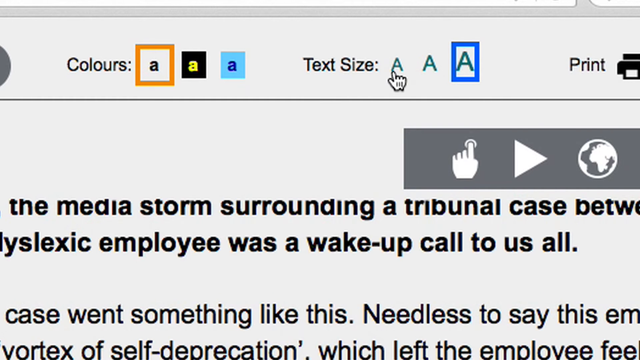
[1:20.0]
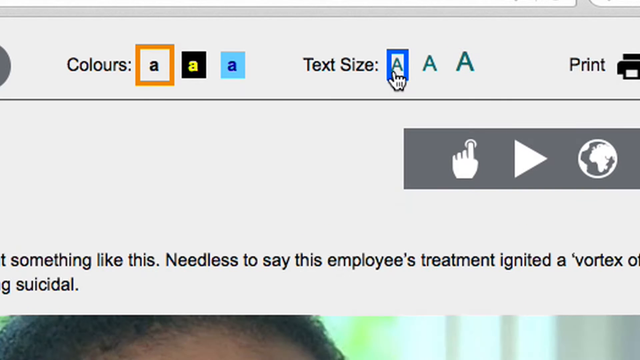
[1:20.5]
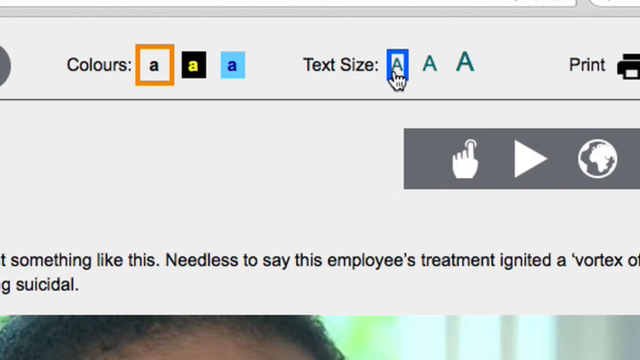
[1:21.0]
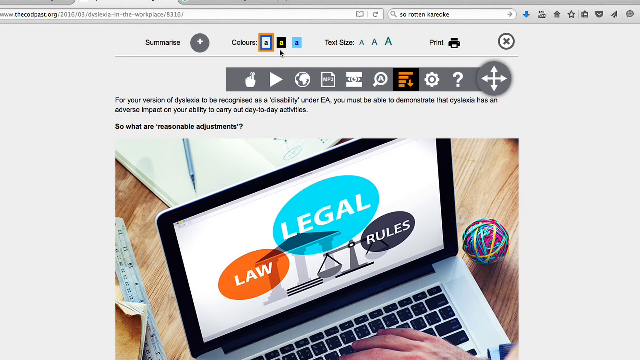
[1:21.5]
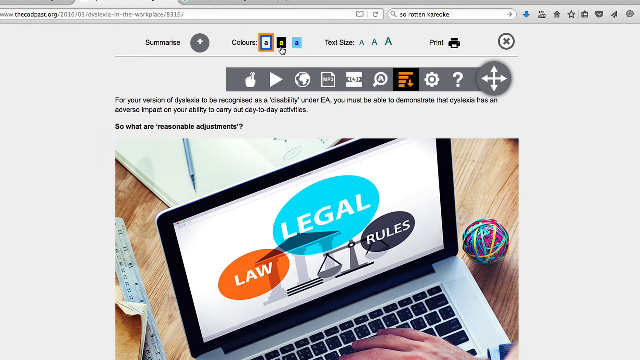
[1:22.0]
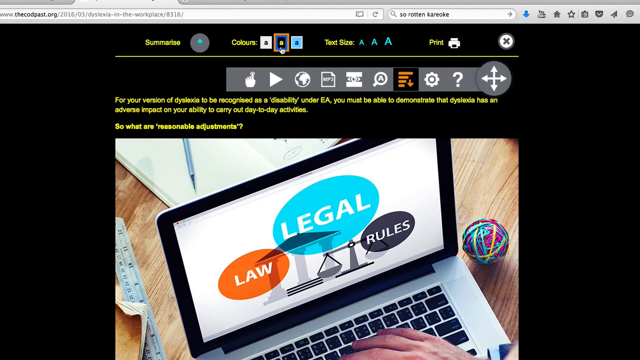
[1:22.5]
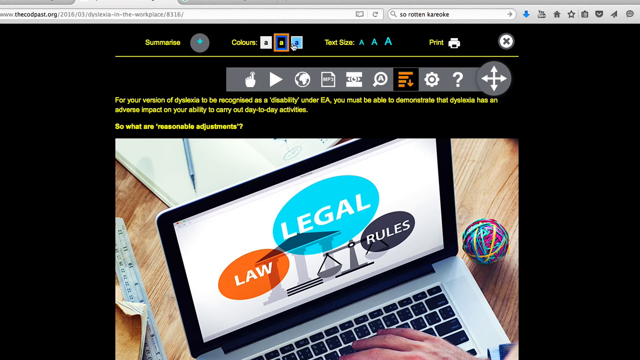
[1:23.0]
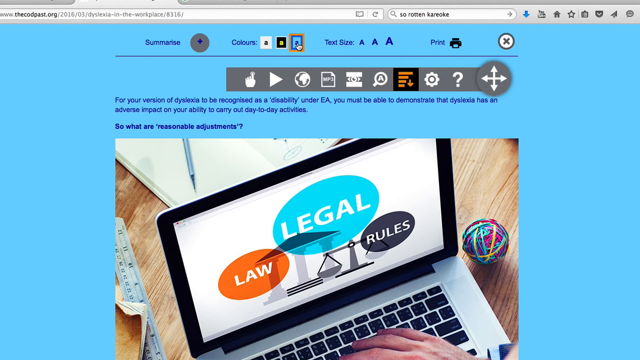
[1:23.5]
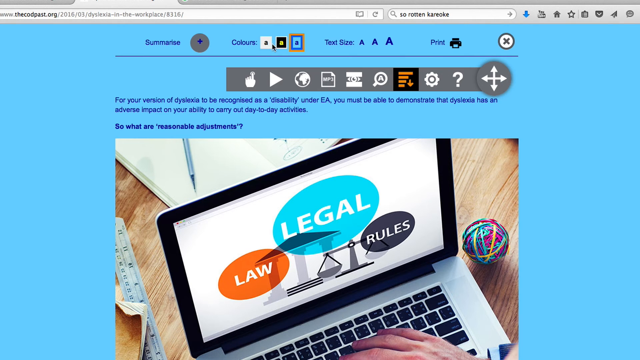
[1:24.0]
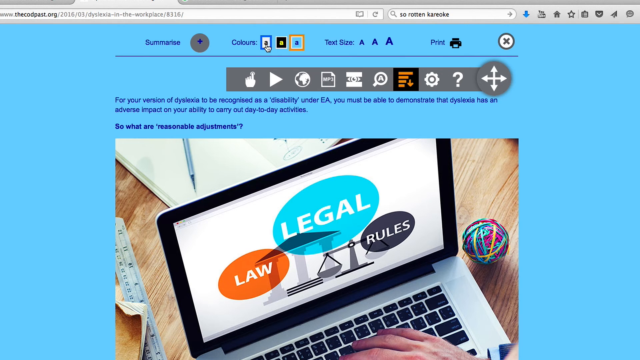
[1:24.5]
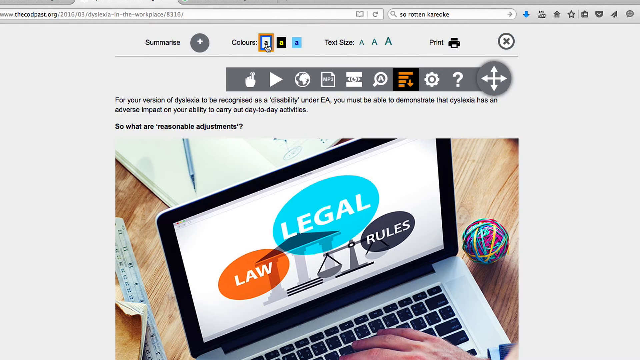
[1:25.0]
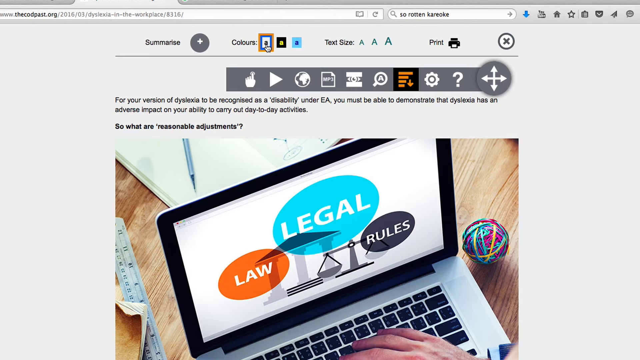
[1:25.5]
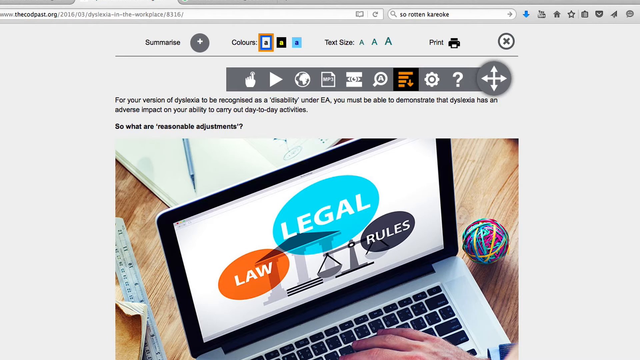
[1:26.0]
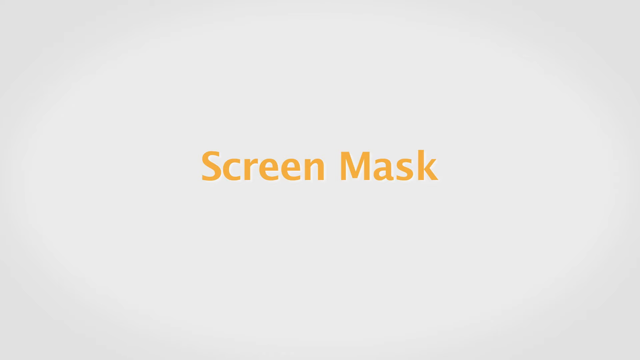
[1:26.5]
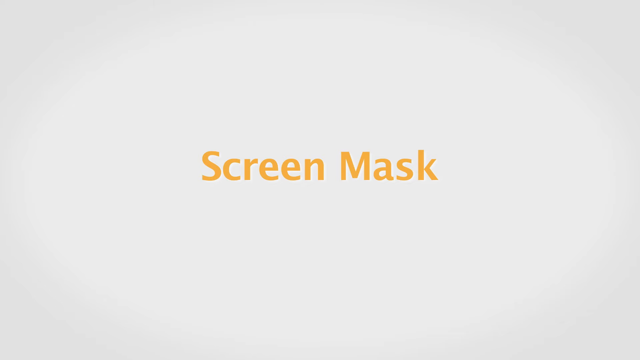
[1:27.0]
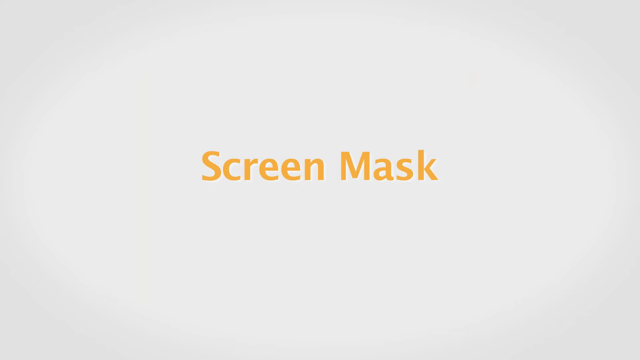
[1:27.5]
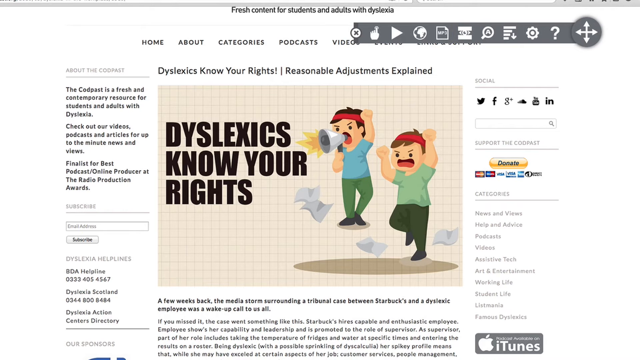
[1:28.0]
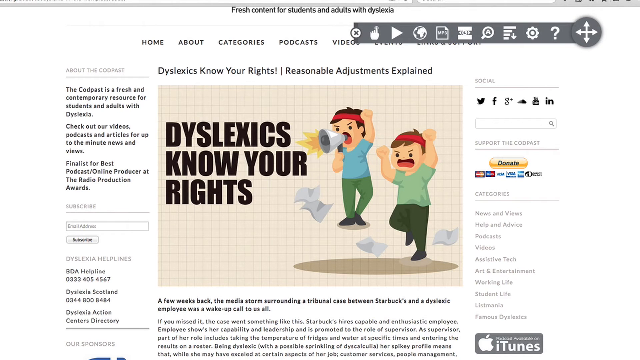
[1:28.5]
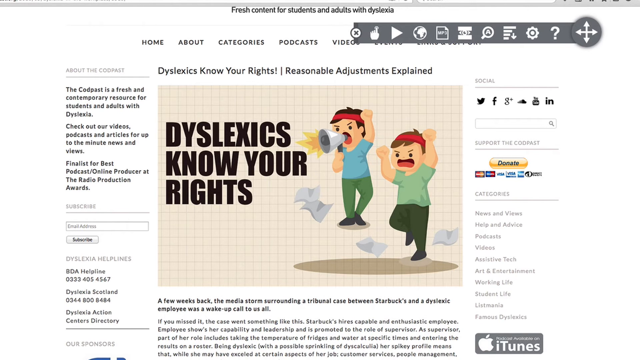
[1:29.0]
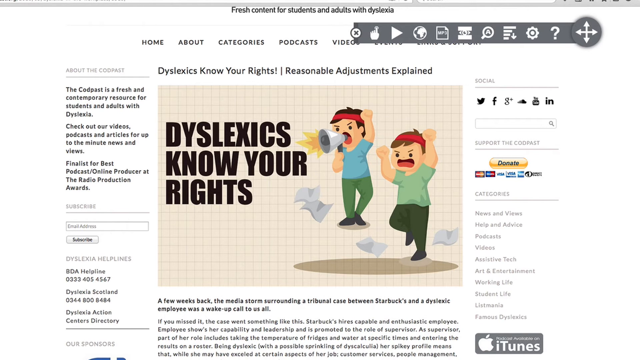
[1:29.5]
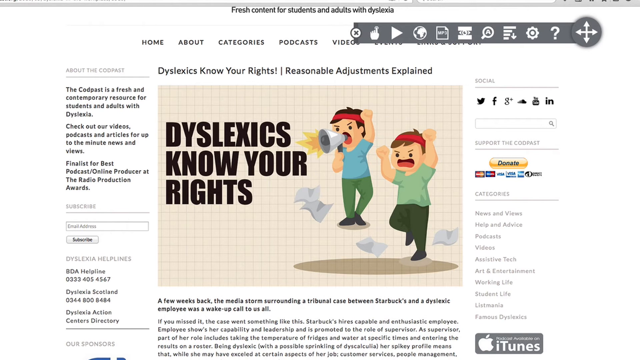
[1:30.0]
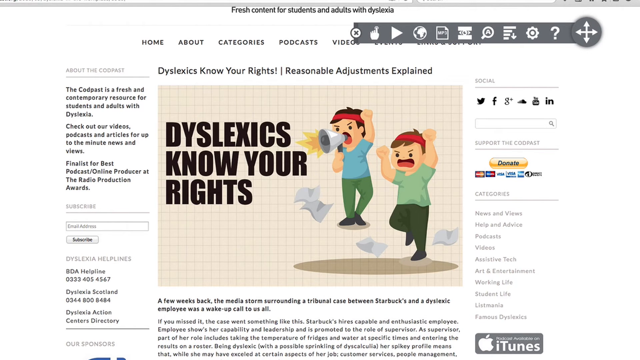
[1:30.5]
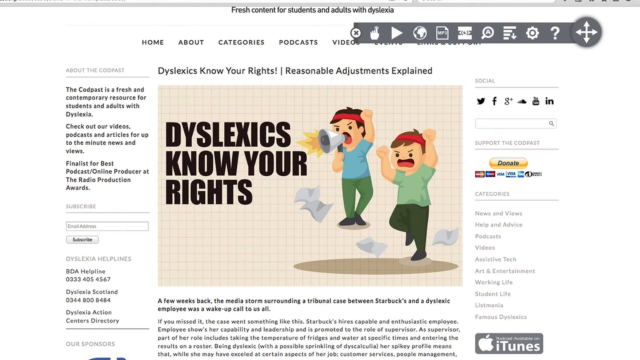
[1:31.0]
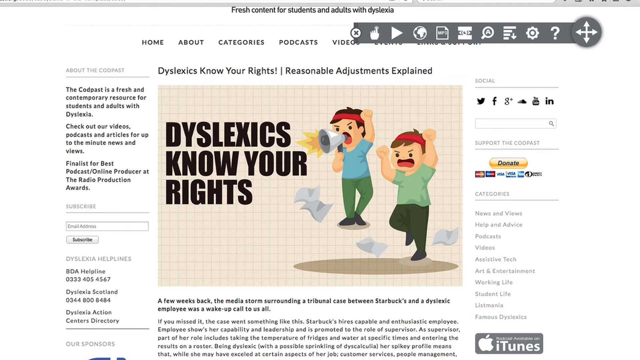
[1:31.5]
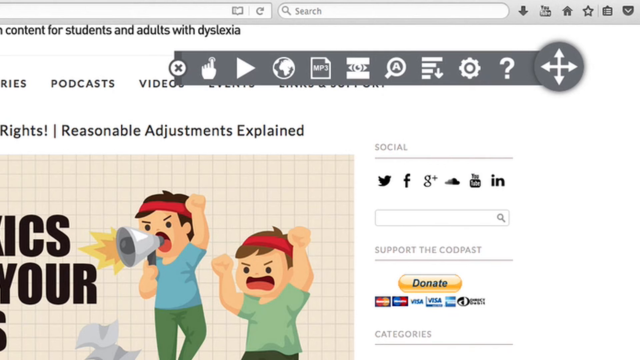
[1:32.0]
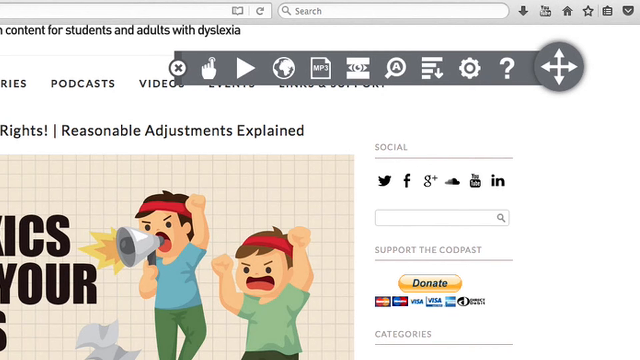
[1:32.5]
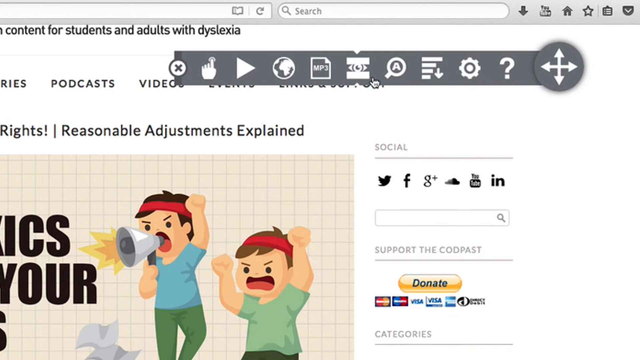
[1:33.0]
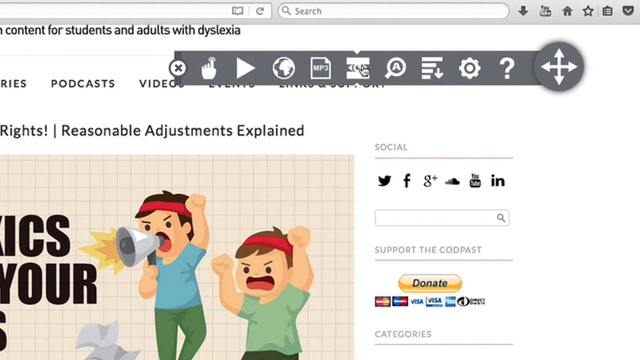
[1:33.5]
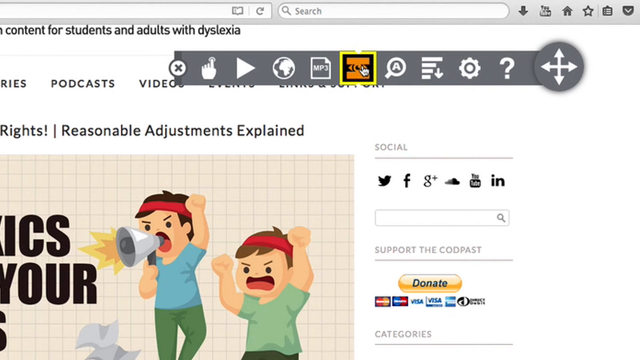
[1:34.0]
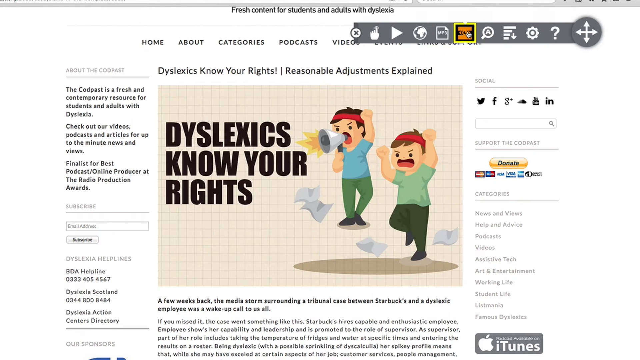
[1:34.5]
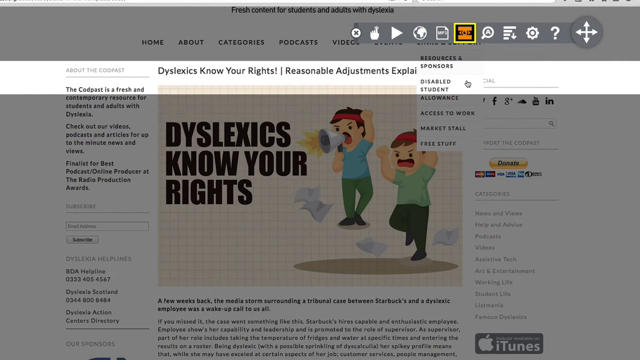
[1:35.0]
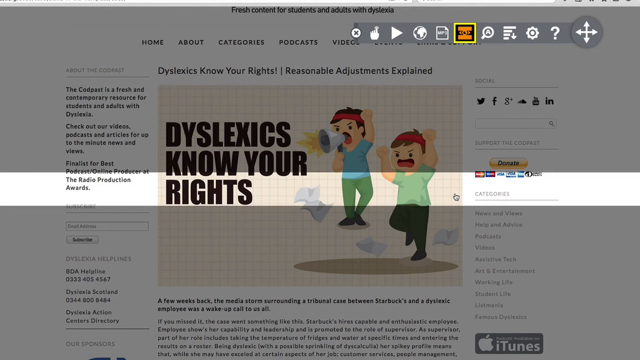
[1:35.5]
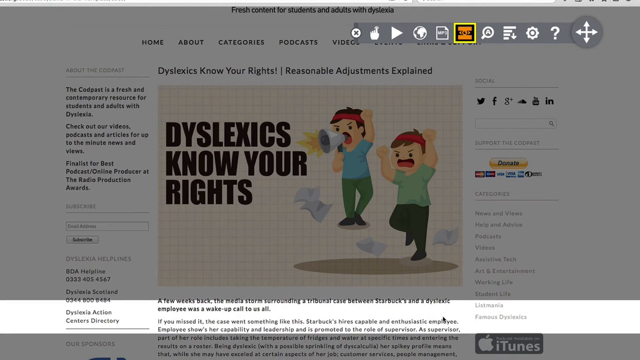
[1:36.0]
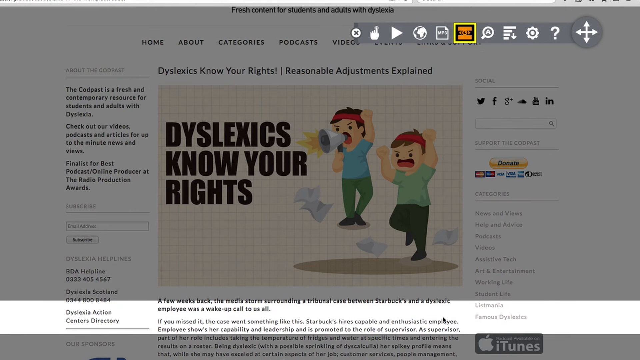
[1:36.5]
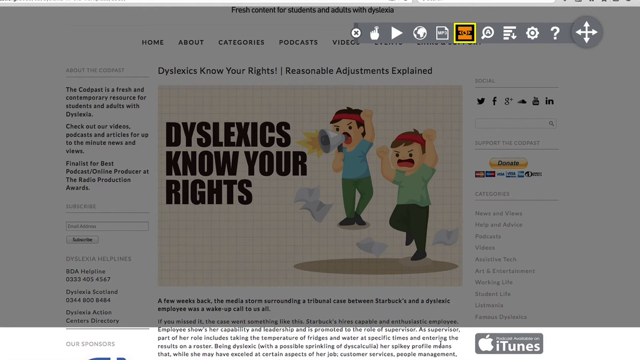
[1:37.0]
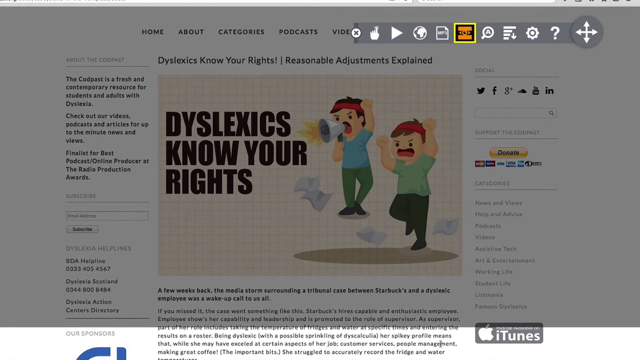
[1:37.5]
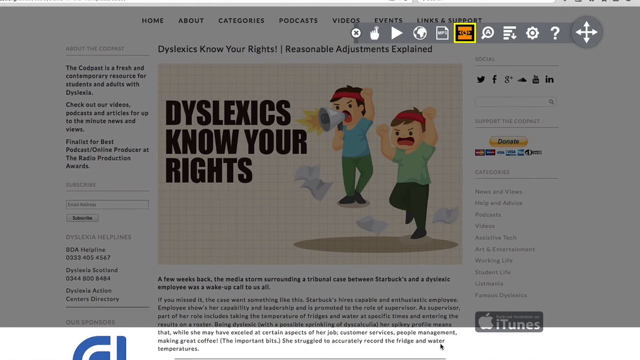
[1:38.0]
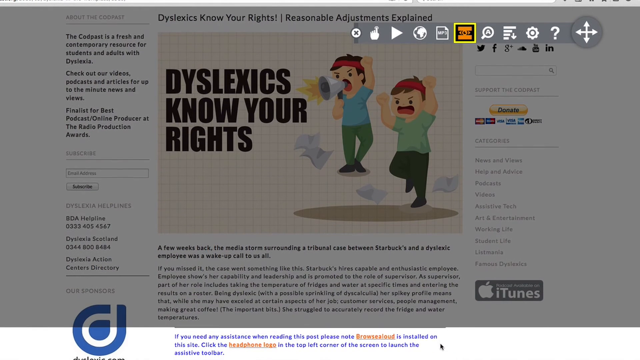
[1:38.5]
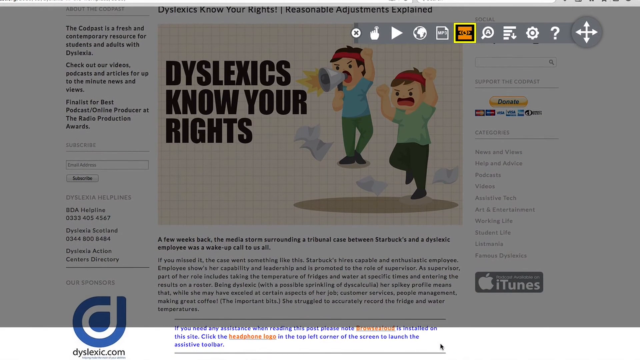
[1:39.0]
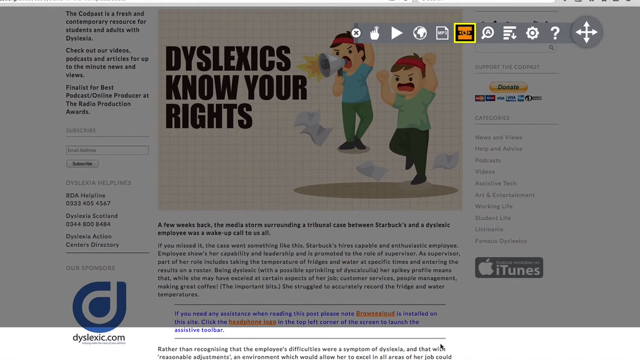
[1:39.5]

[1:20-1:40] A zoomed-in shot of the top of the page shows the person changing the text size and the colors of the text. As they click on different options, the web page background changes colors, jumping between colors like blue, white, and black. The video cuts to a white page with "screen mask" written in orange, then back to the article "dyslexics know your rights," which has a cartoon image of two people jumping up holding horns and screaming into them. It then cuts to the options at the top right, where the tools for people with dyslexia are. The person clicks on the eye icon, showing a highlighted portion that can be moved to different areas of the screen to focus on certain text only: a small line strip across the screen that moves up and down. They move it up and down.